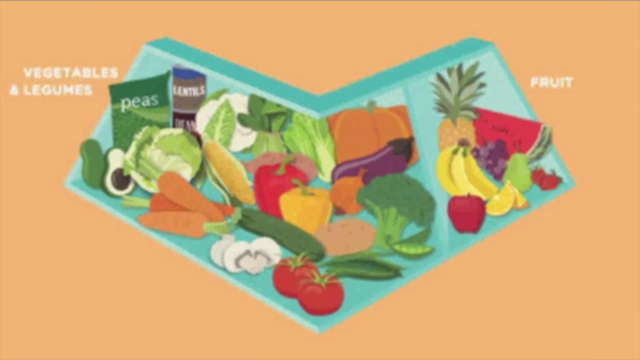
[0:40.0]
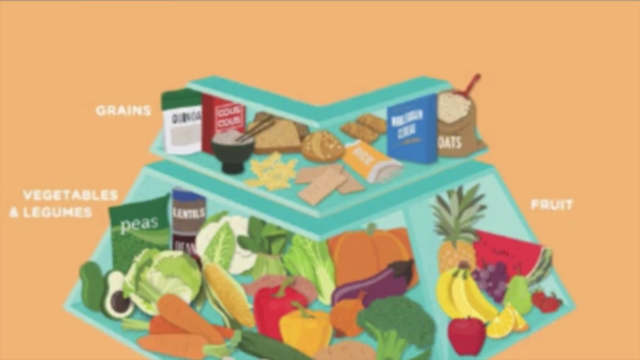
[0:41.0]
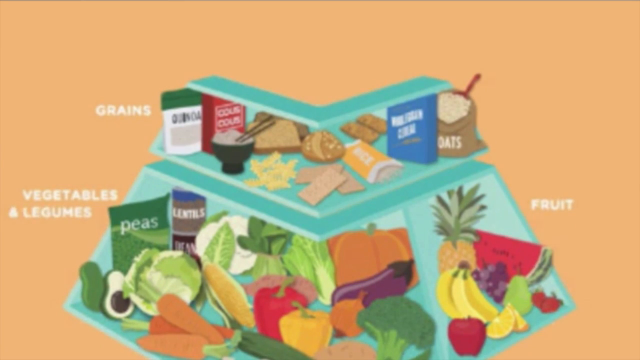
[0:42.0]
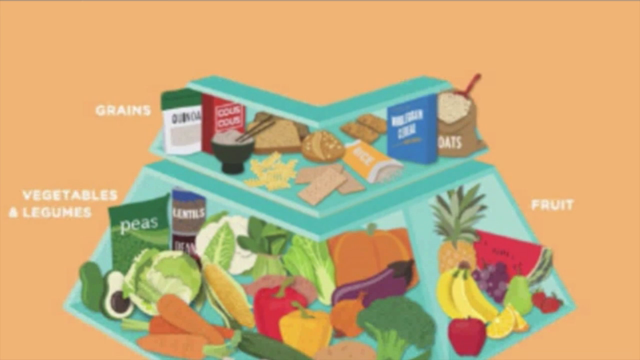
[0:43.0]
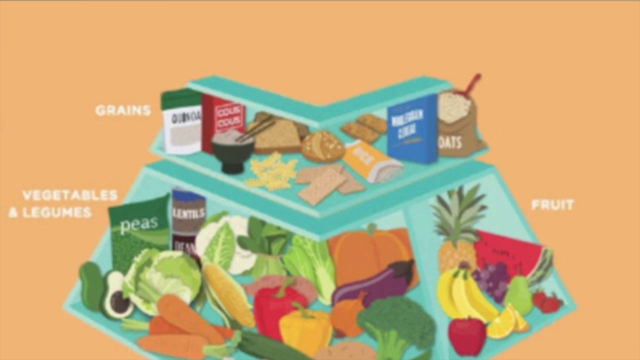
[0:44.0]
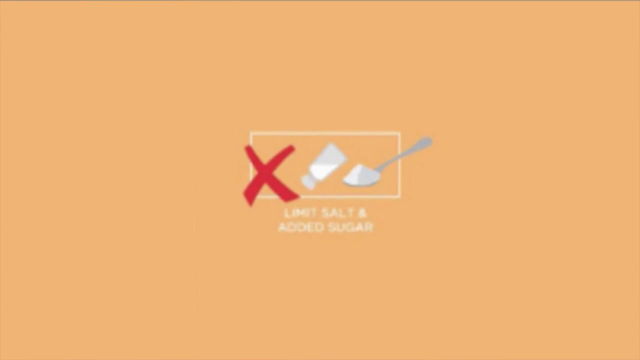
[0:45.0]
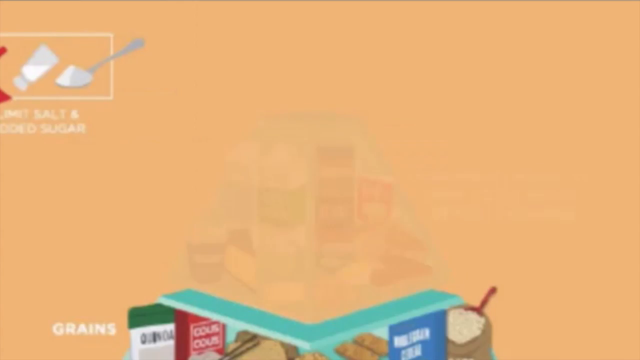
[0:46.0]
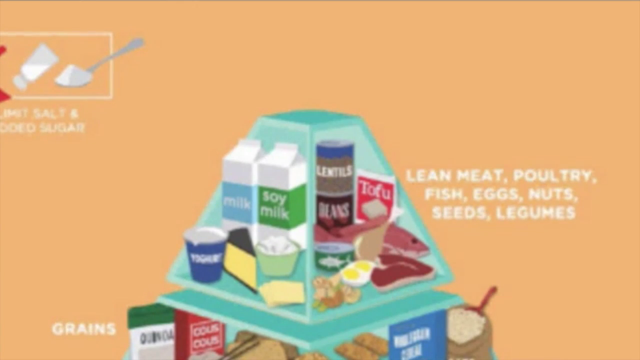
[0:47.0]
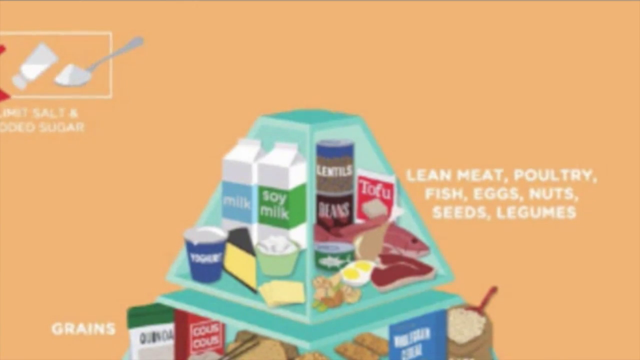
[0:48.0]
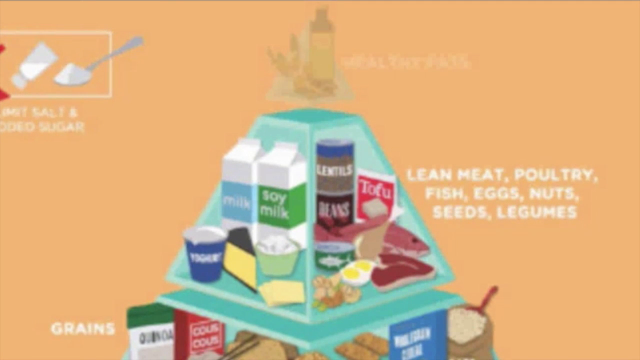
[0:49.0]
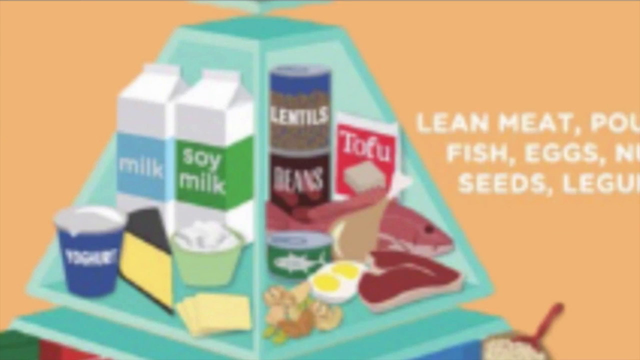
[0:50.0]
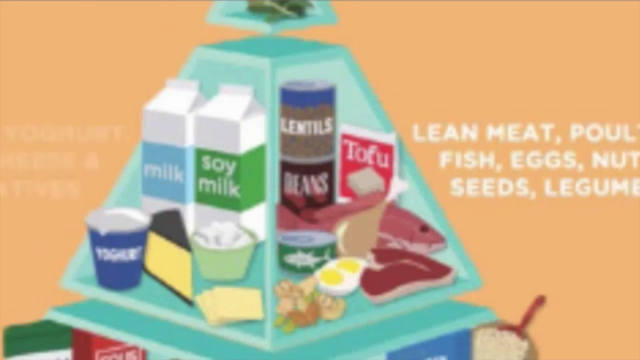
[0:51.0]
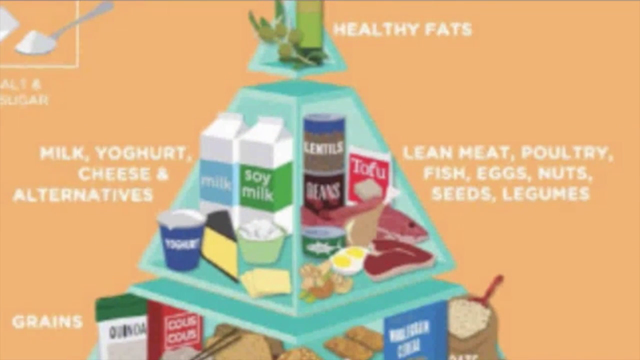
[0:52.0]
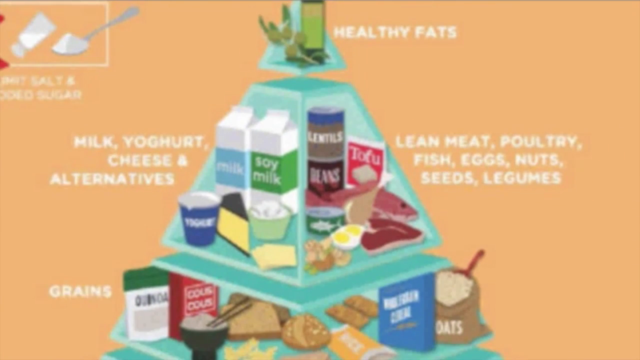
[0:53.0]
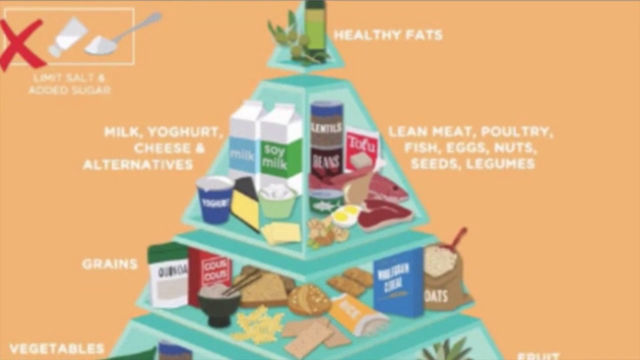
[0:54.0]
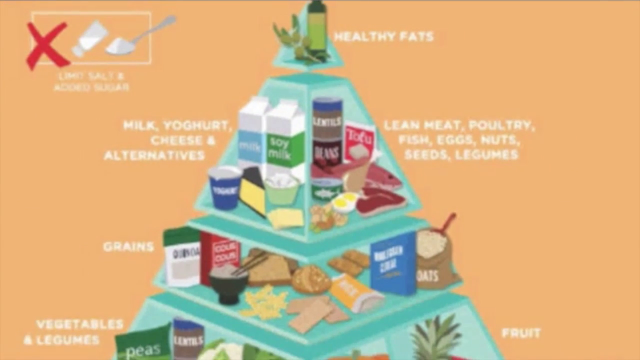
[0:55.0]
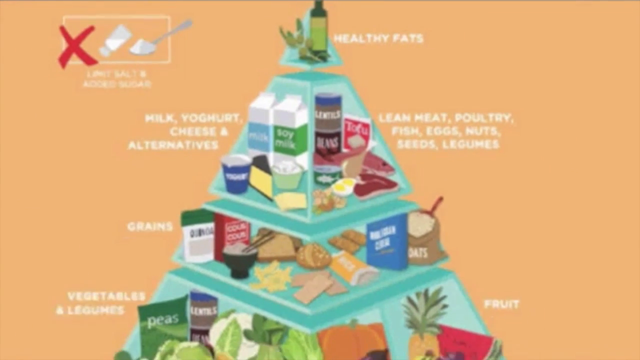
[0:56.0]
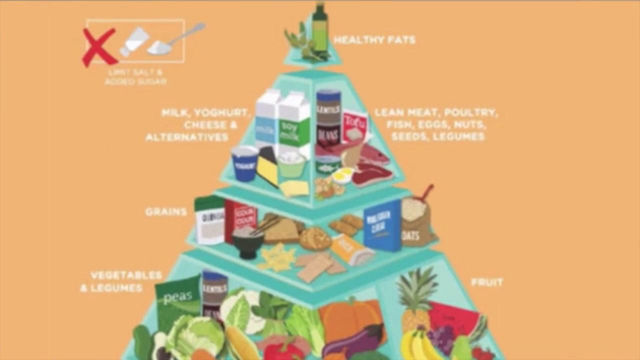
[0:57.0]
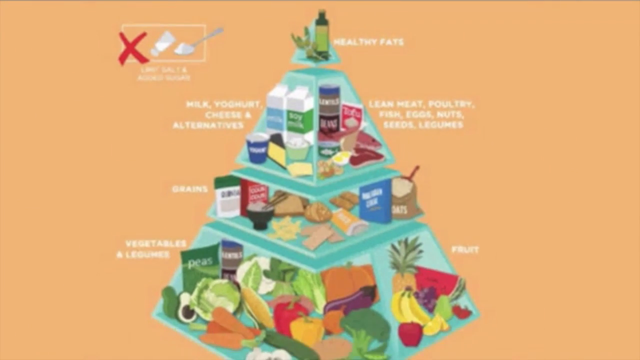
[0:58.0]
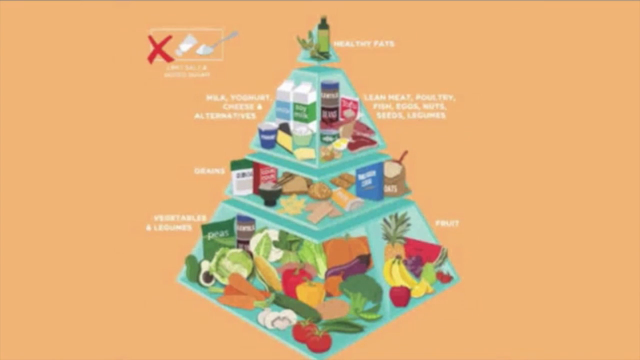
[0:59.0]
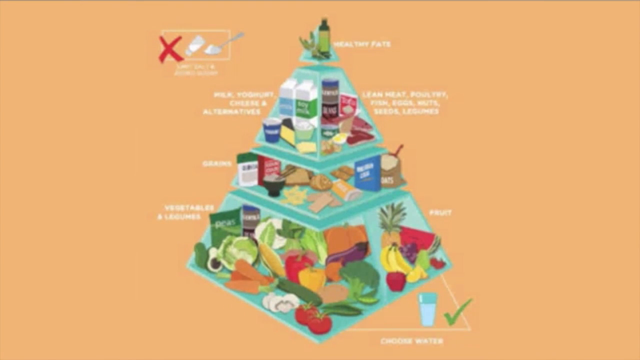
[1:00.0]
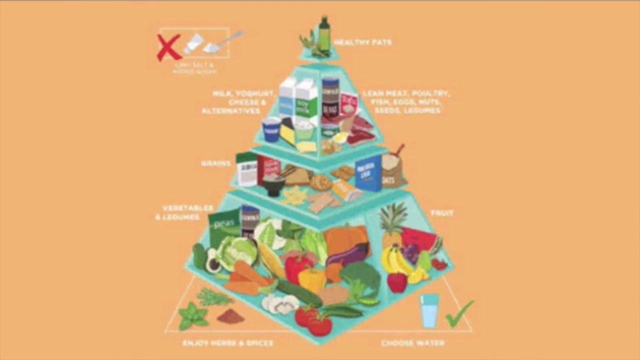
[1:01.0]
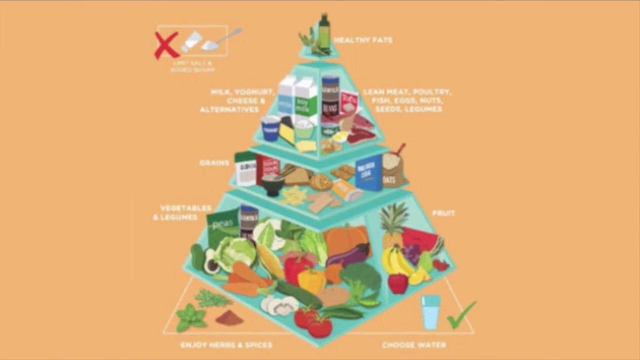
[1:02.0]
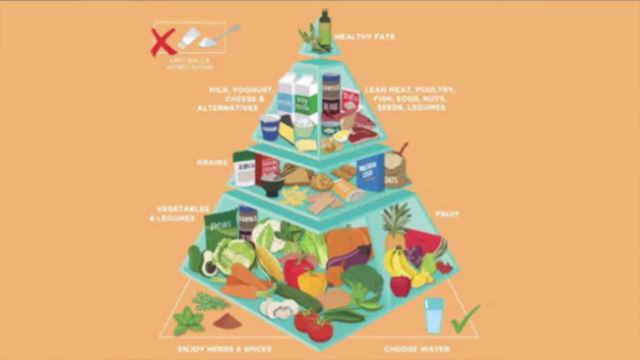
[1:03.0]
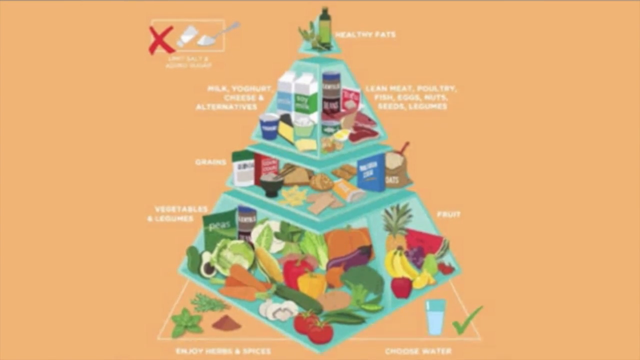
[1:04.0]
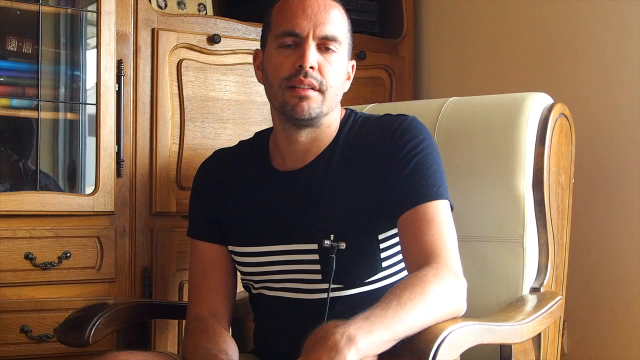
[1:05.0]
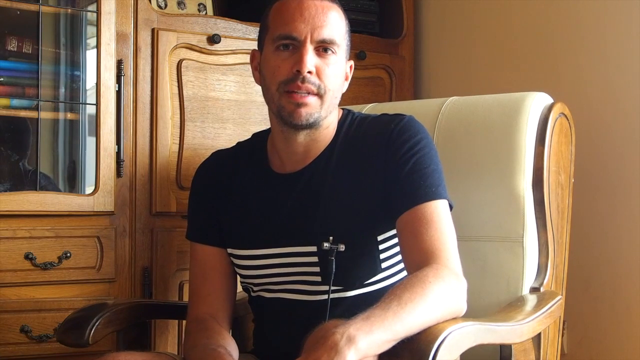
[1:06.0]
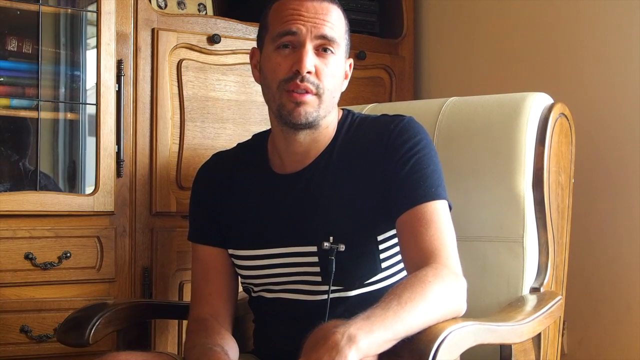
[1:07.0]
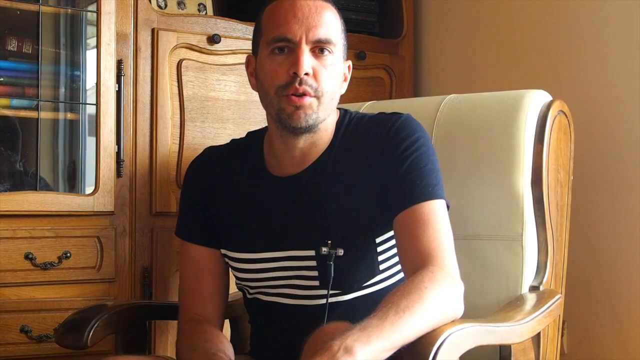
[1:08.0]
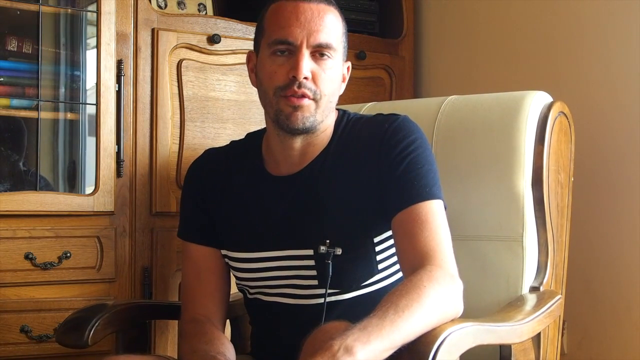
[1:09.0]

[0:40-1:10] The view is zoomed in on the first tier of the pyramid, with vegetables and legumes and fruit. The second tier, labeled grains, follows, with oats, chia and rice. A peach background then appears with a white rectangle outline in the center containing a salt shaker with salt and a spoon with sugar. There is a big red X on the left side of the rectangle, and underneath it says "limit salt and added sugar". The next tier of the pyramid follows, with "lean meat, poultry, fish, eggs, nuts, seeds, and legumes" typed in white to the right of it. In the tier are tofu, beans, lentils, a dead fish, a hard-boiled egg sliced open, a steak laying next to the fish, a can with a tuna fish on the front, a turkey leg leaning up against the fish, soy milk, milk, yogurt, a slice of cheese, and a green bowl with a white substance in it.